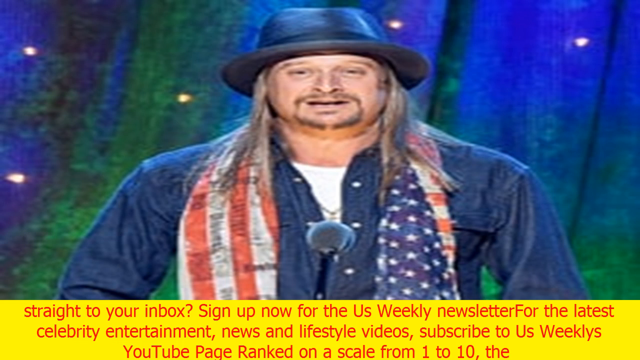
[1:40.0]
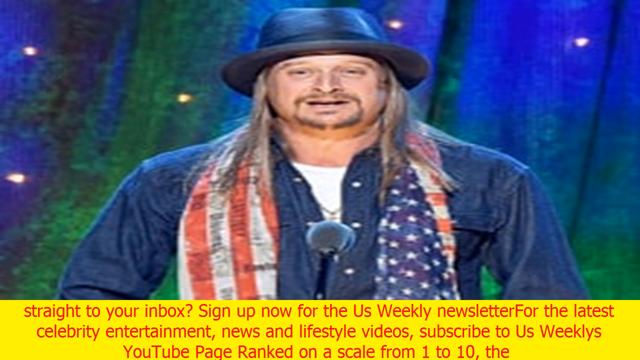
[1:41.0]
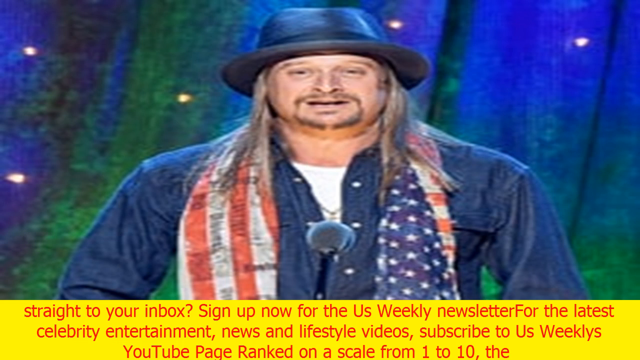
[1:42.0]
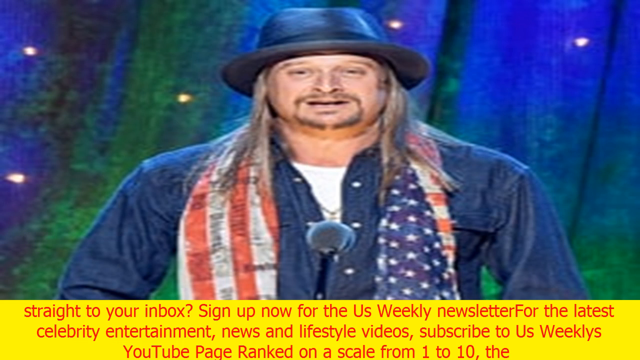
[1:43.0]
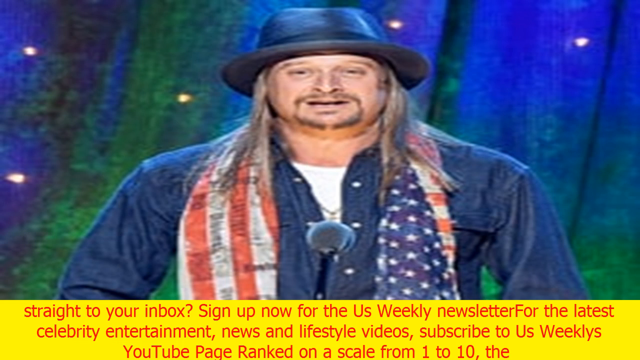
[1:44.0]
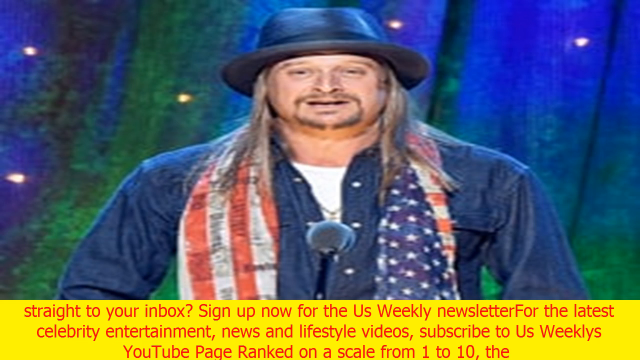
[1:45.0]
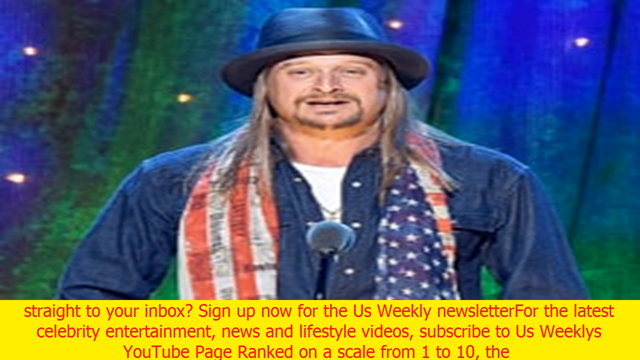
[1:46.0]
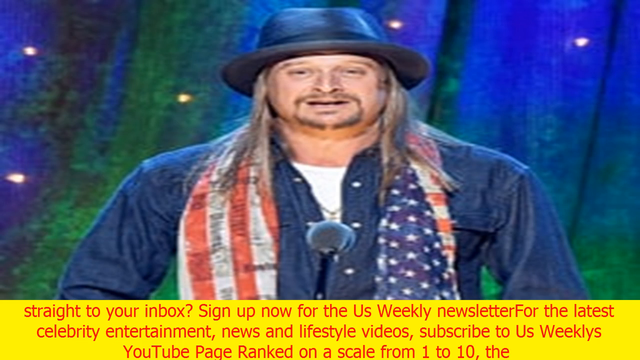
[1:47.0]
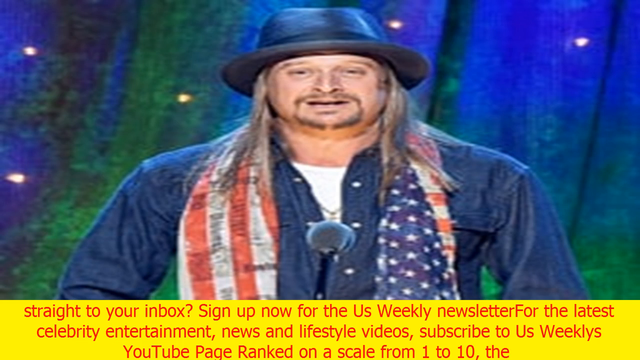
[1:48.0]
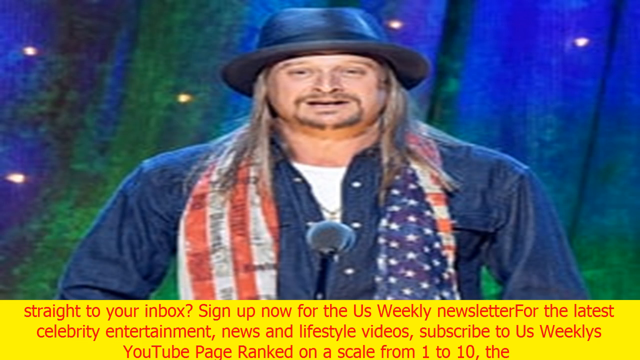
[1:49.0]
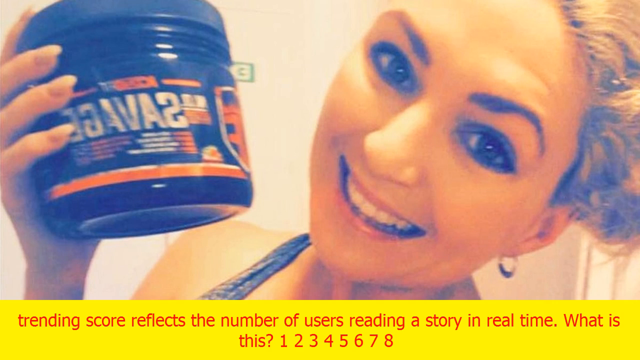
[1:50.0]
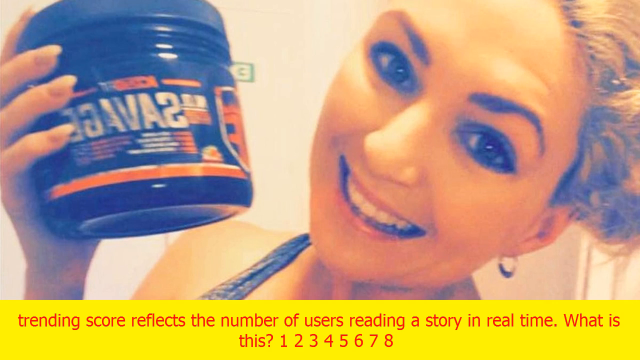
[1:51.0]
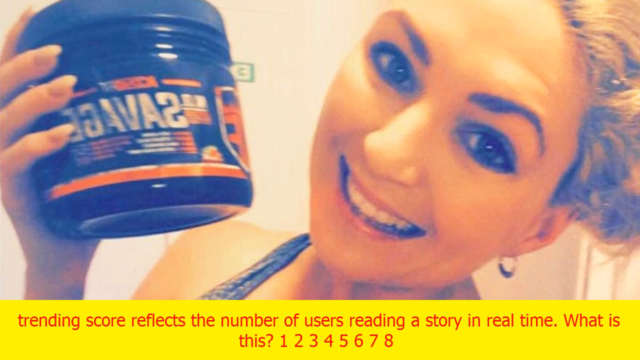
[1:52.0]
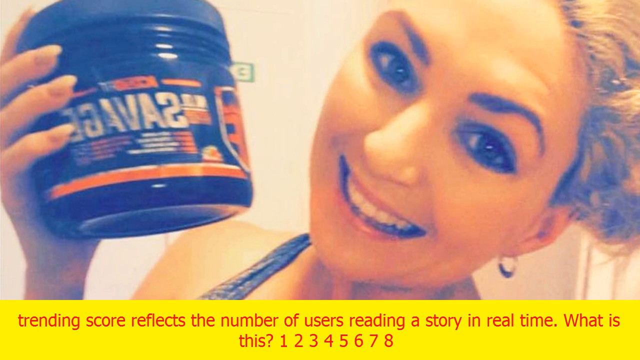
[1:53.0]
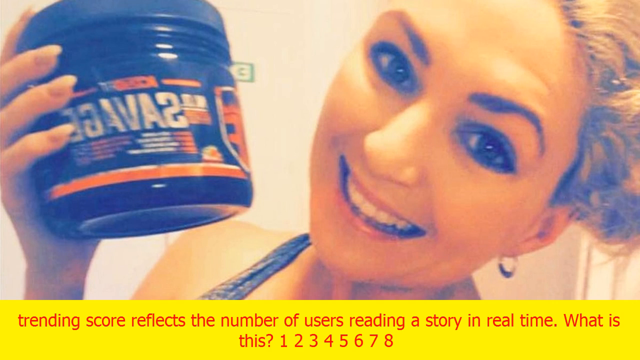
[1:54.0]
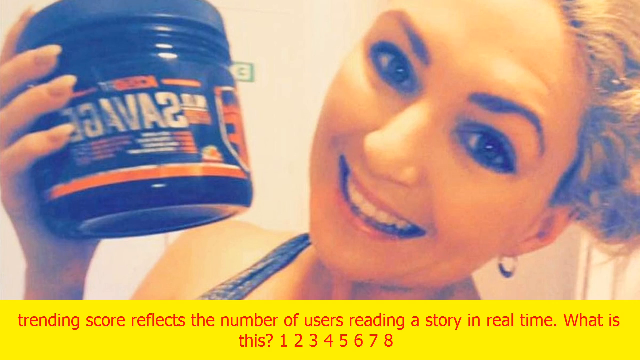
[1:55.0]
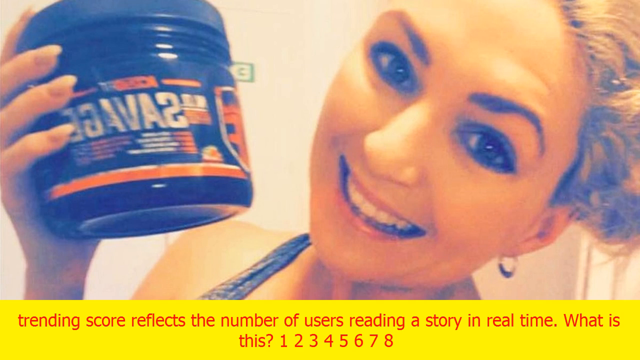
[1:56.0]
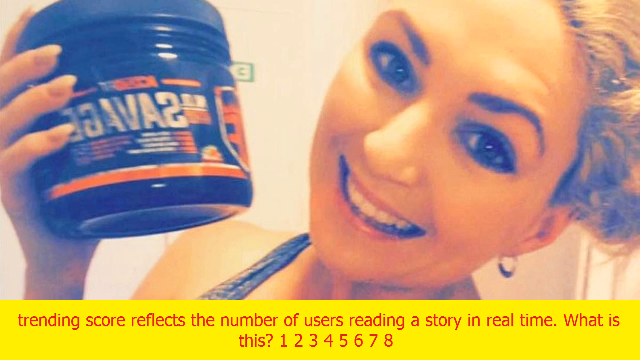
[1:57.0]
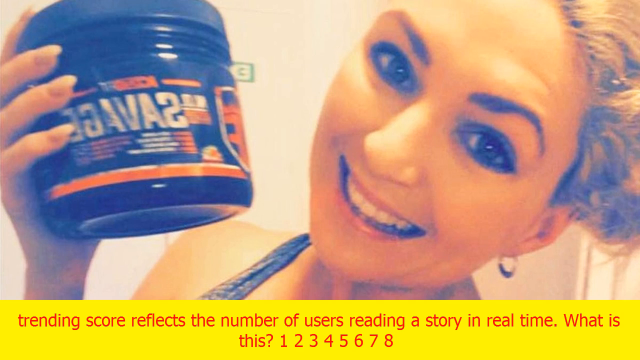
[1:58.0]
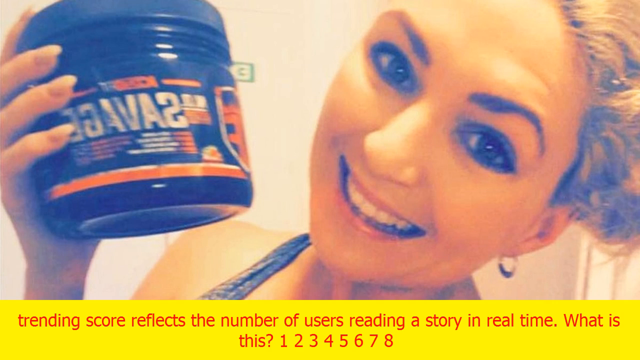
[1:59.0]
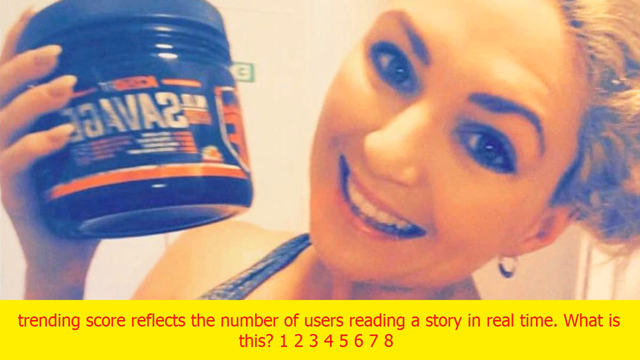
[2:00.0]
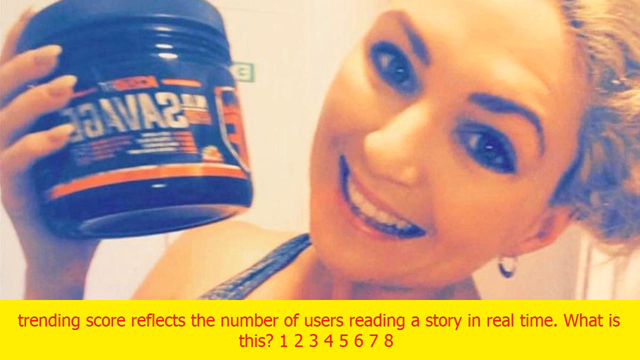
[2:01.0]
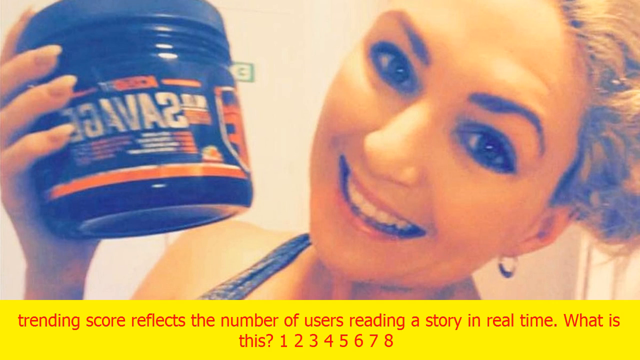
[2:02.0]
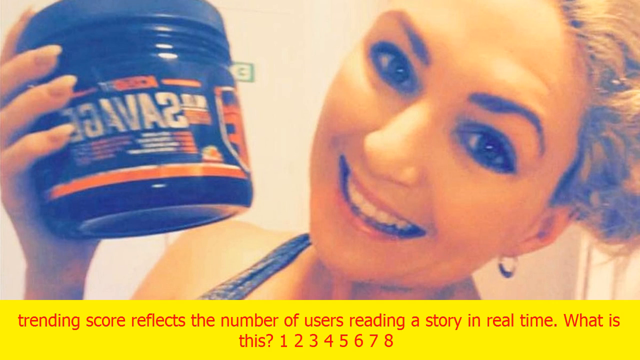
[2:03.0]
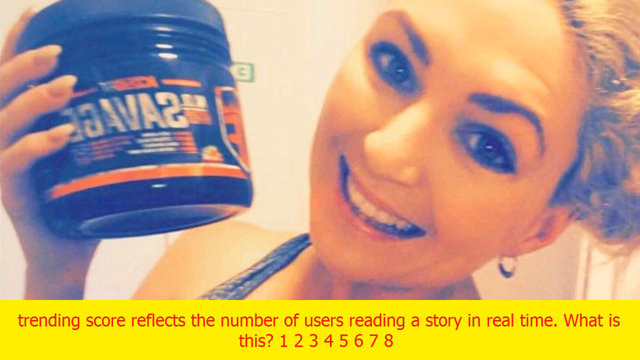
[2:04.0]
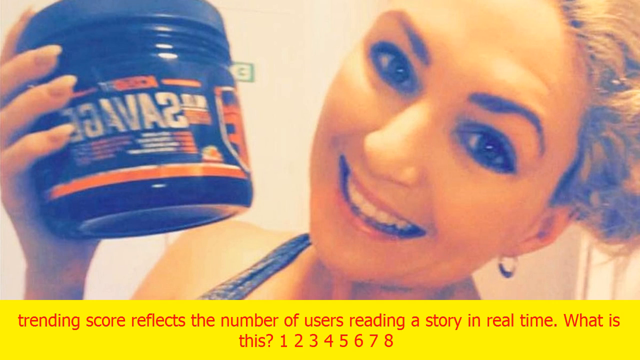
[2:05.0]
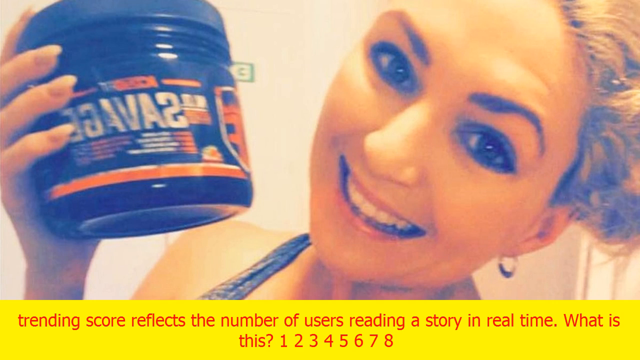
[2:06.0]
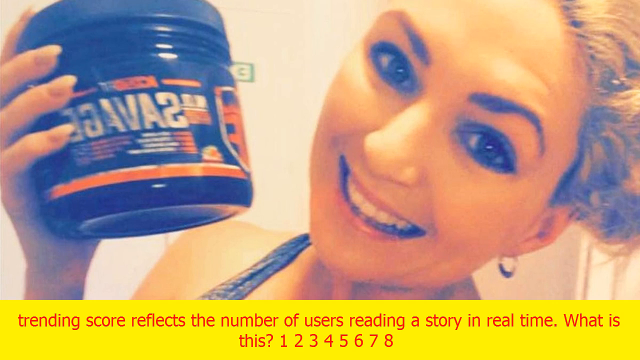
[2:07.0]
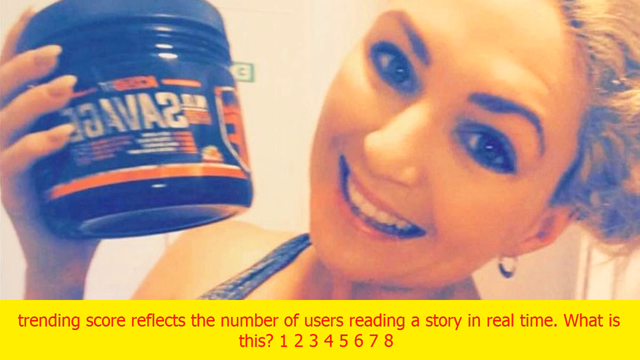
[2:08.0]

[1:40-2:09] The man continues speaking into the microphone; he wears a hat, a scarf with the American flag, a jeans jacket with a white shirt underneath, and has very long hair and a beard. Red writing on a yellow banner stays superimposed. Then the image of the woman holding the protein reappears; she is blonde and about 45 to 50 years old. The video ends on the image of the woman with the final information about the syndrome and the problems related to it.